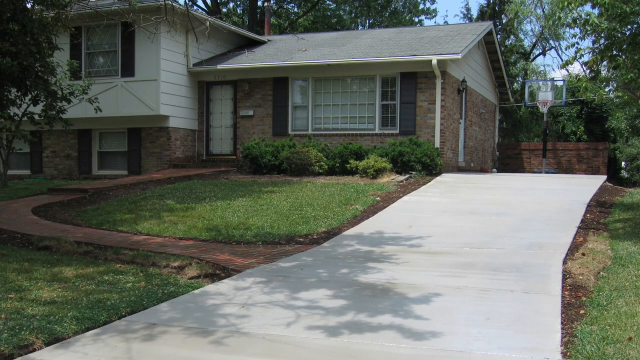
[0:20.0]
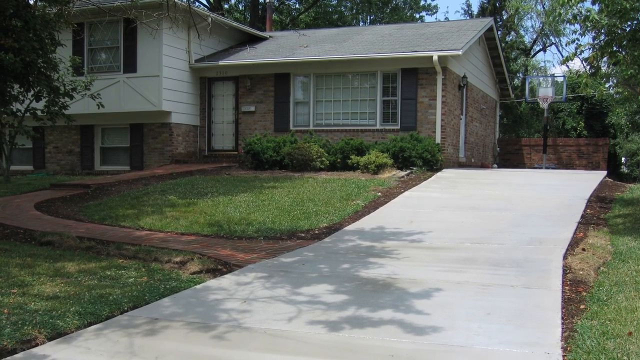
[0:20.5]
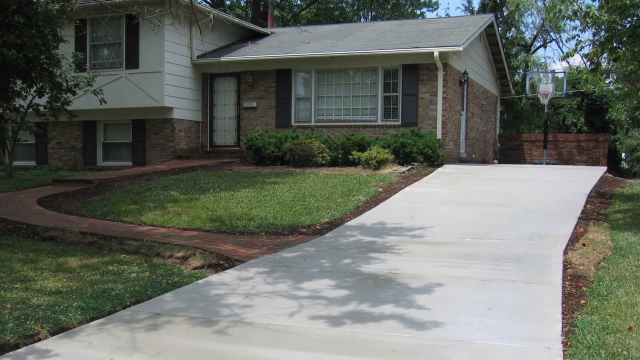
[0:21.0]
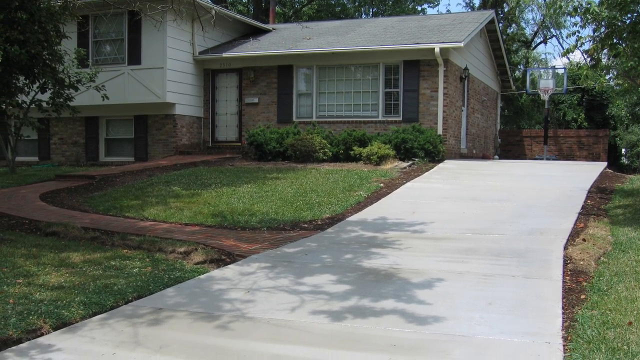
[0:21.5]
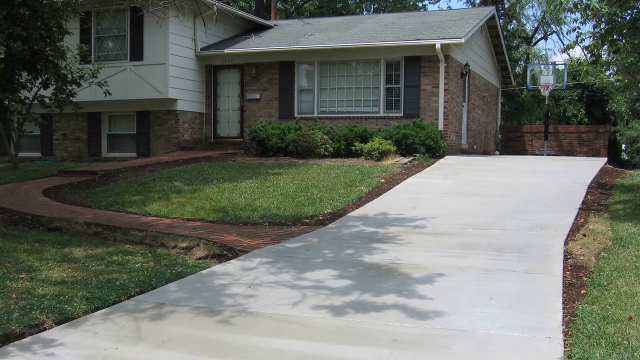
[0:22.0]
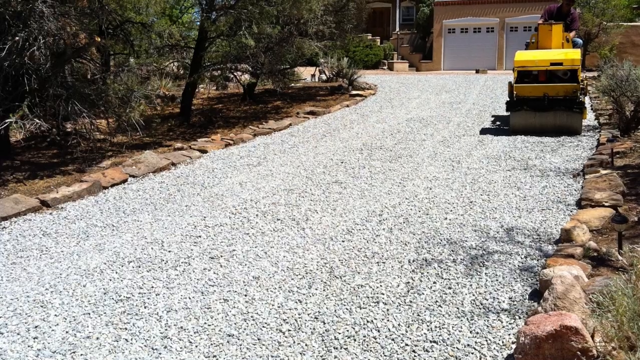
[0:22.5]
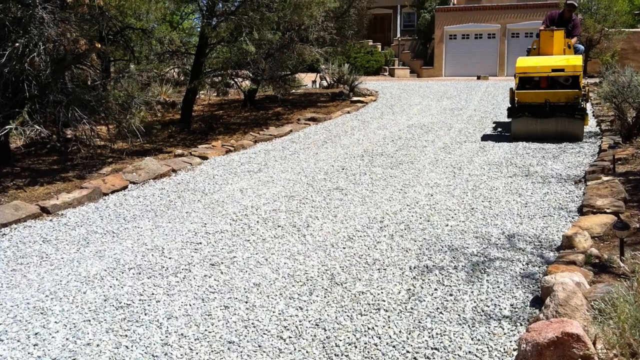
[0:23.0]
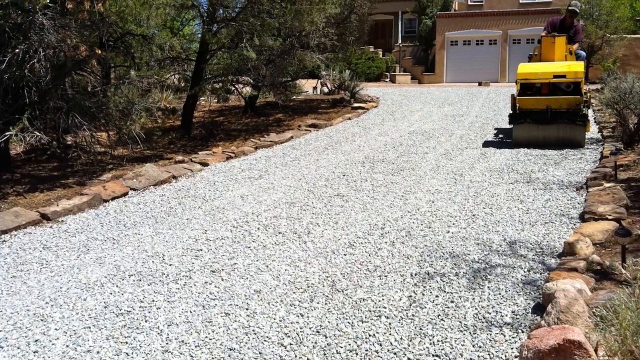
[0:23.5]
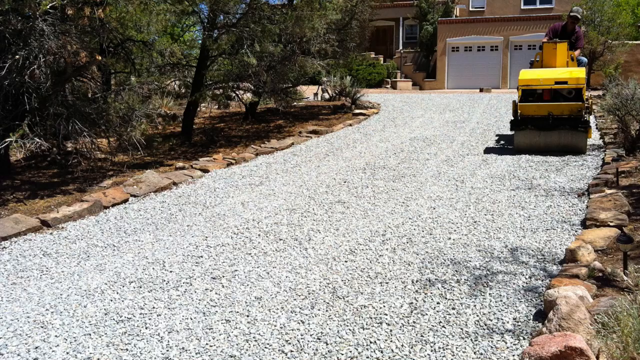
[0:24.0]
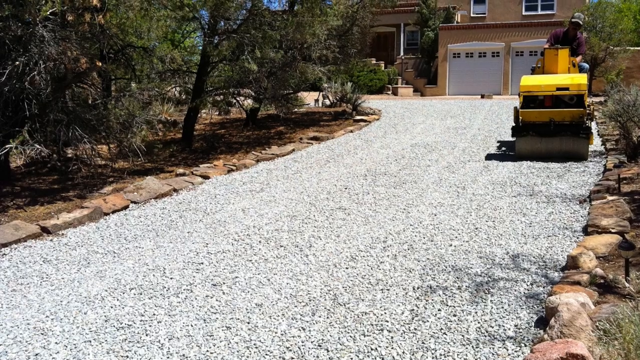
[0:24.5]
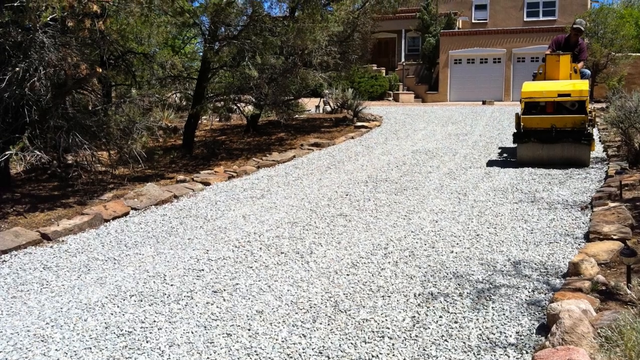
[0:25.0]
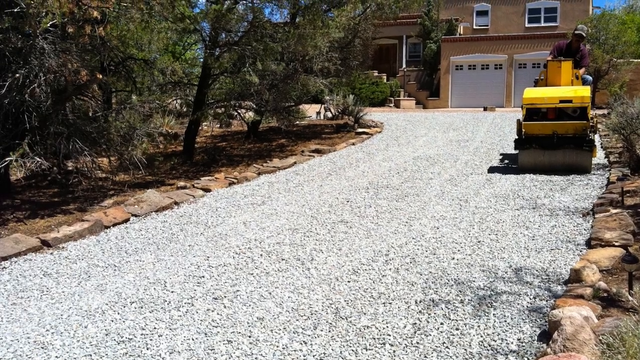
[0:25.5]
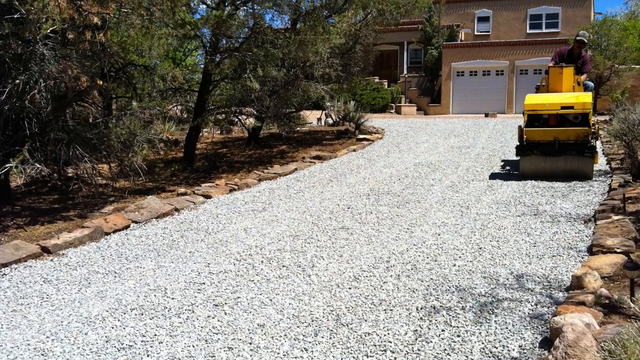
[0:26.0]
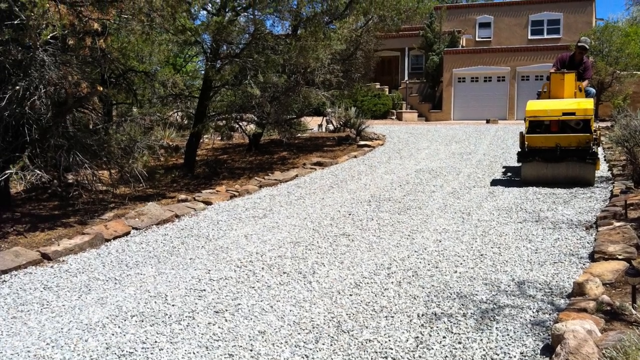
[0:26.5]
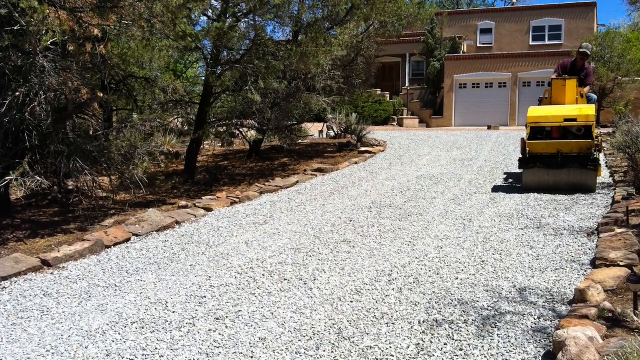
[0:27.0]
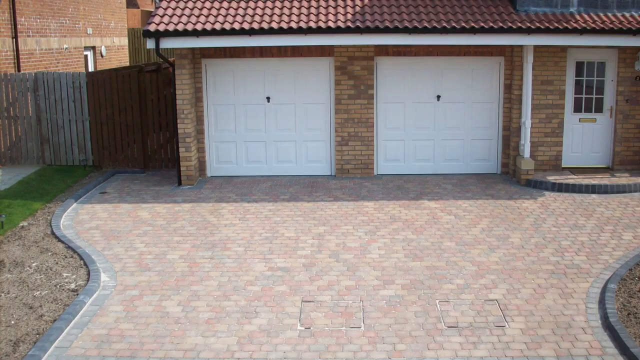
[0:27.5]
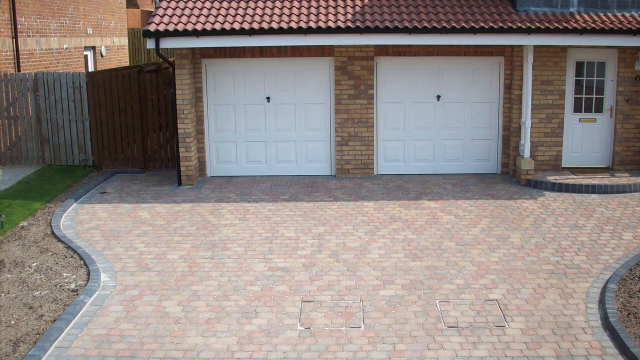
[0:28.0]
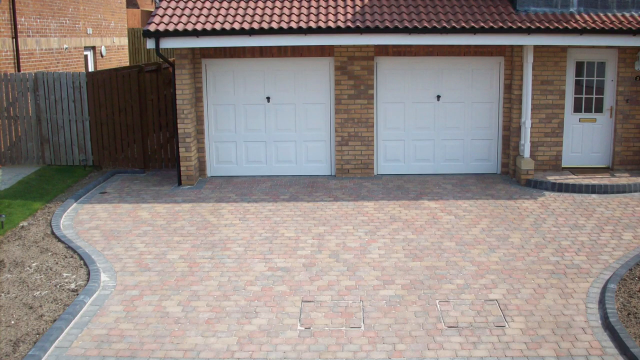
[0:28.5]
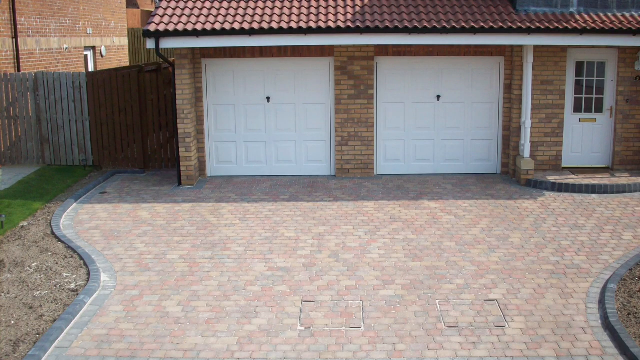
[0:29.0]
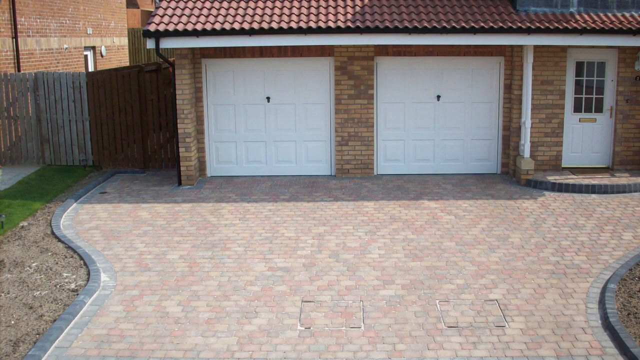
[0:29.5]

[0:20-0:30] A man, possibly between 35 and 45 years old, is climbing on a yellow machine that is grading and paving the tarred road. Text appears on the screen. The double-storey house stands on a hill, with no one in the yard. The house has white doors and a red roof, and part of it is brown and part is white. There is a green grass lawn, and small white stones are behind the man. There are pipes with water running over them, two garages, and big trees.